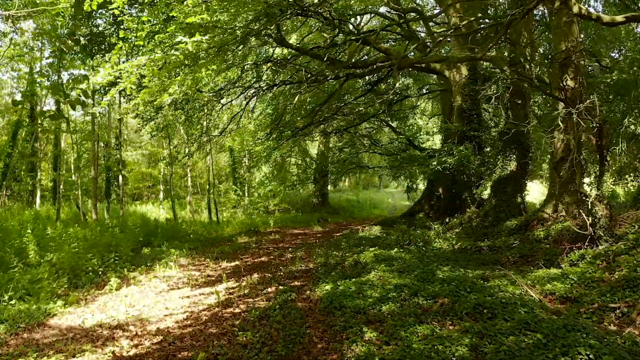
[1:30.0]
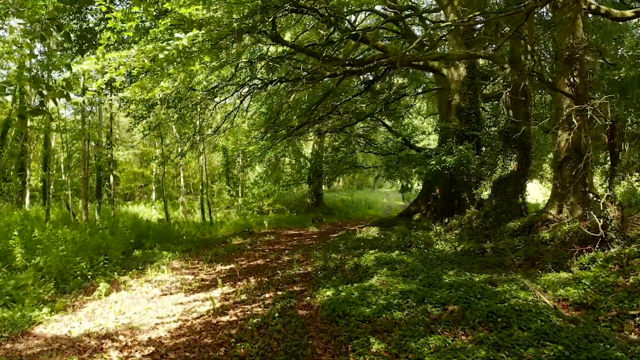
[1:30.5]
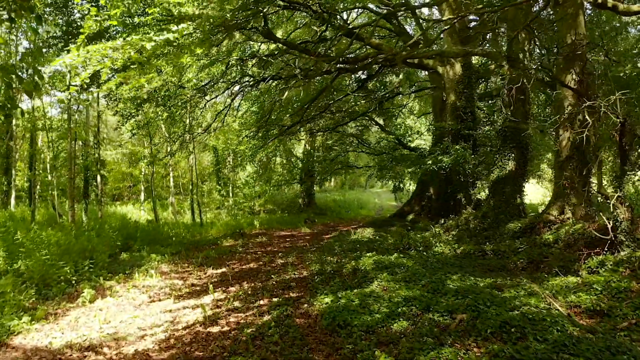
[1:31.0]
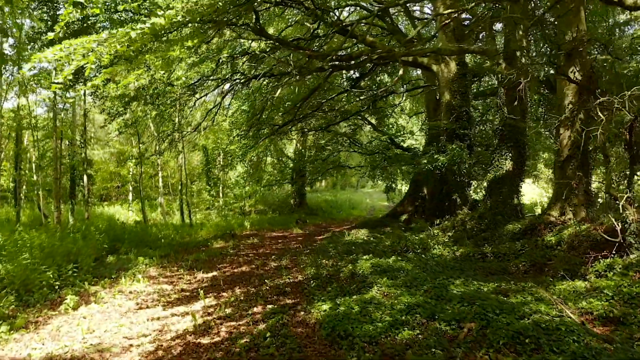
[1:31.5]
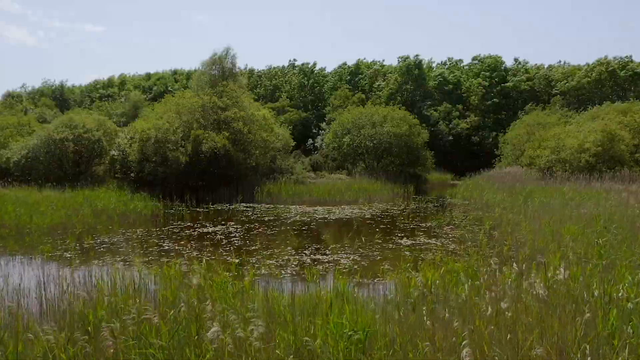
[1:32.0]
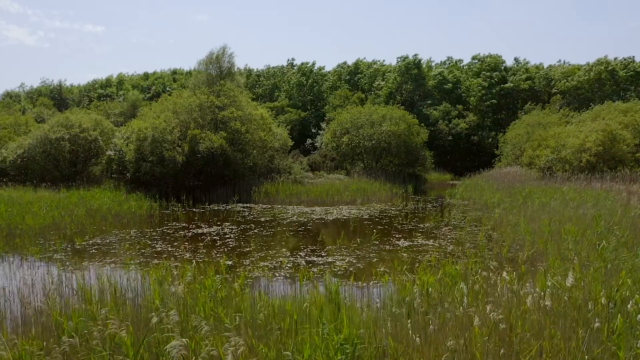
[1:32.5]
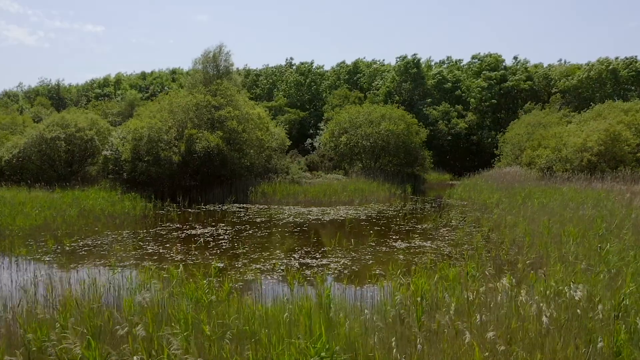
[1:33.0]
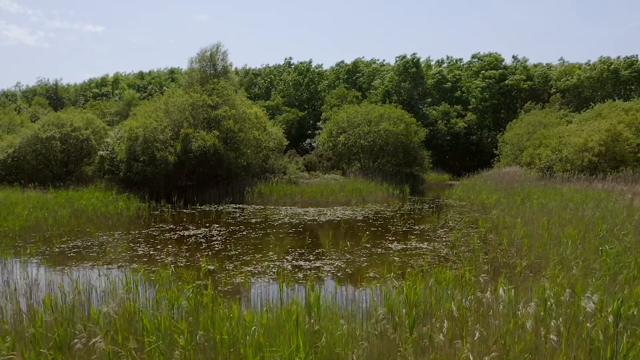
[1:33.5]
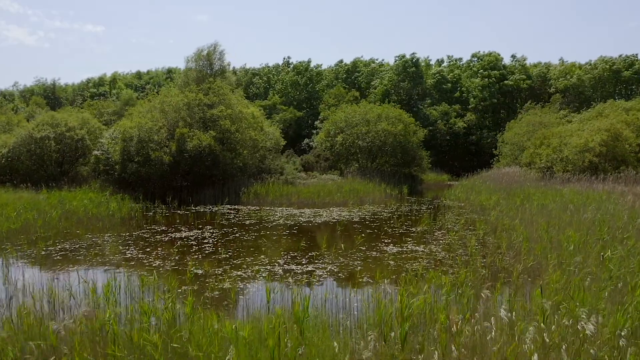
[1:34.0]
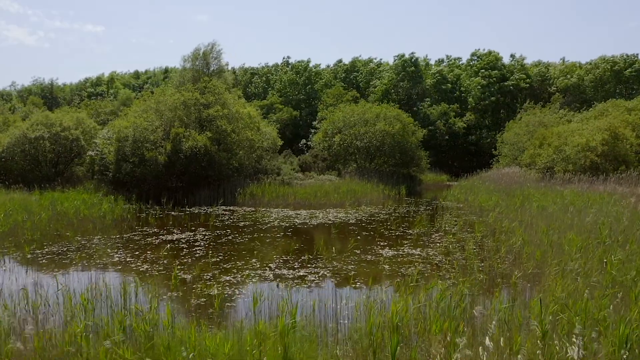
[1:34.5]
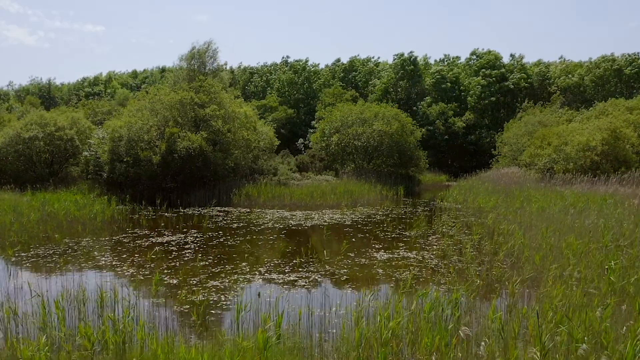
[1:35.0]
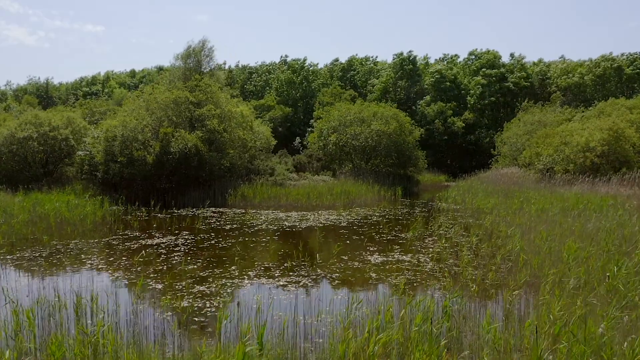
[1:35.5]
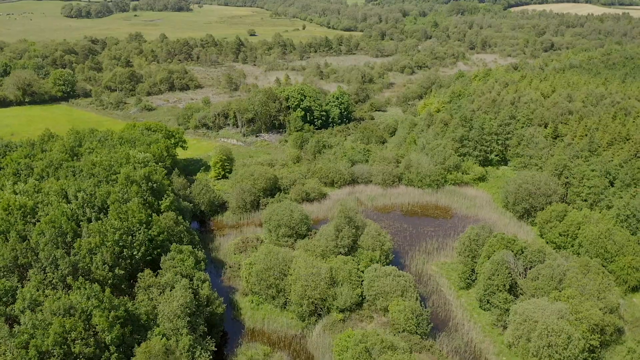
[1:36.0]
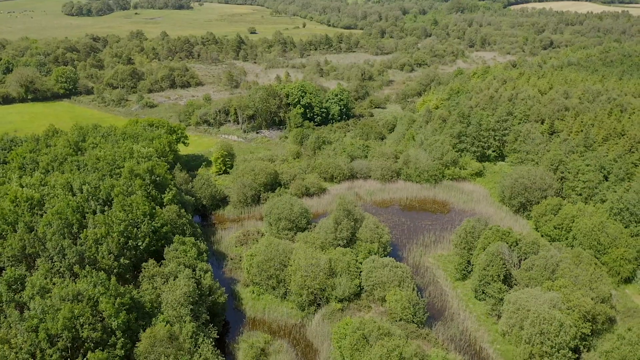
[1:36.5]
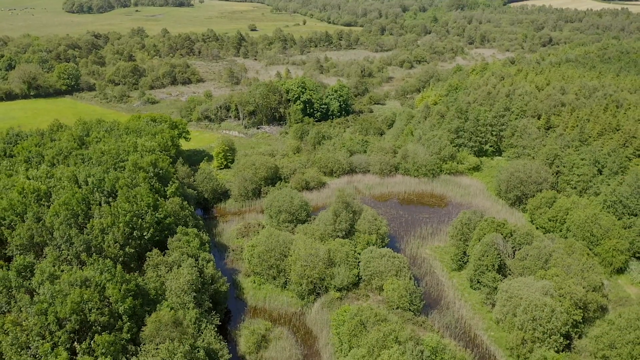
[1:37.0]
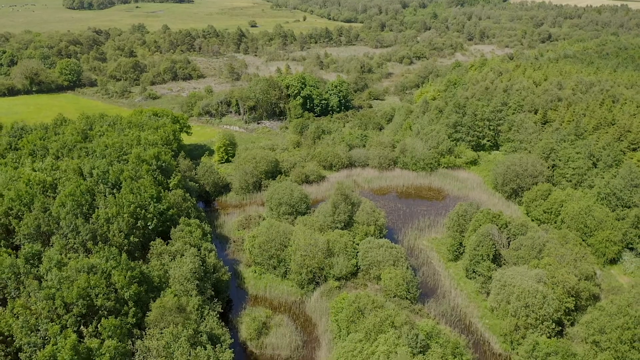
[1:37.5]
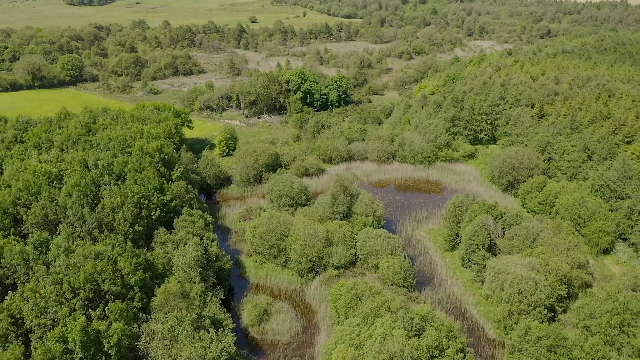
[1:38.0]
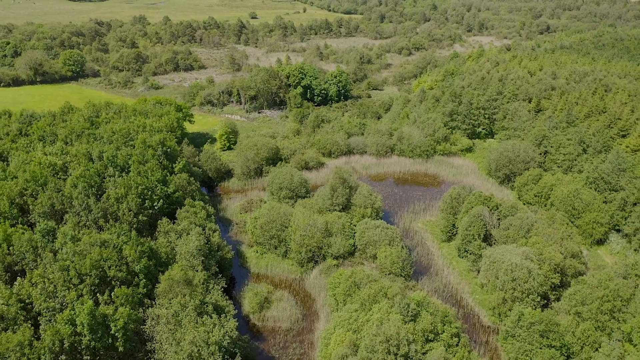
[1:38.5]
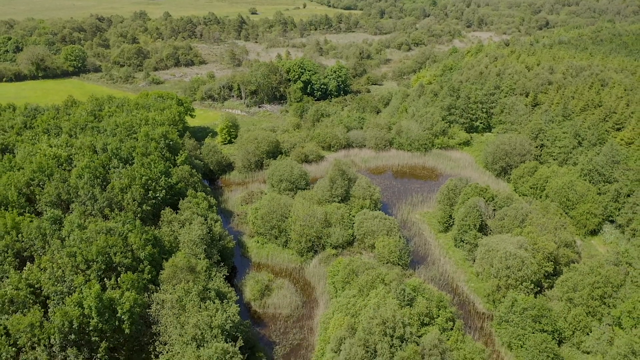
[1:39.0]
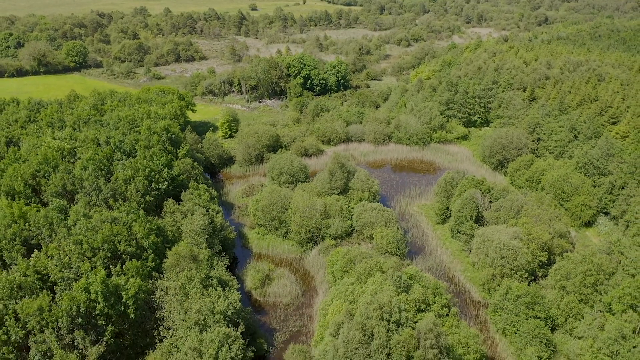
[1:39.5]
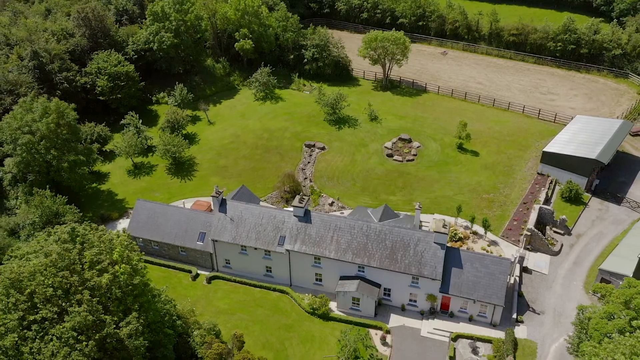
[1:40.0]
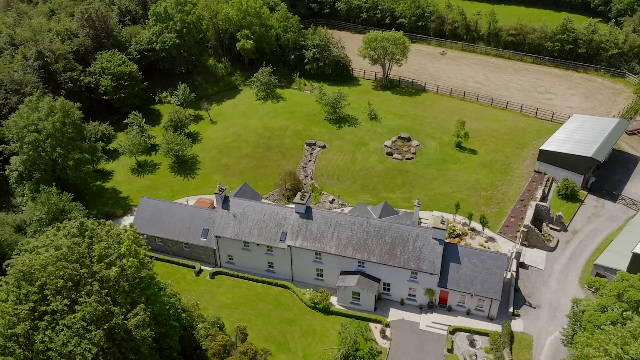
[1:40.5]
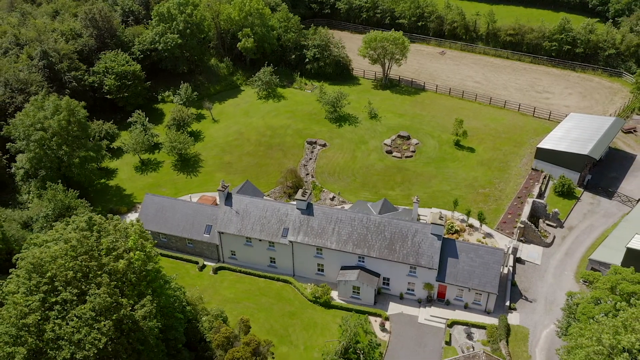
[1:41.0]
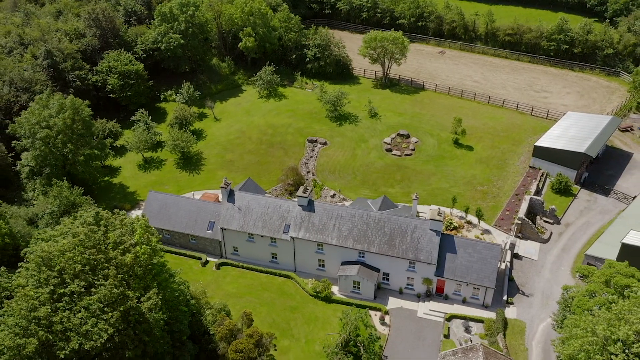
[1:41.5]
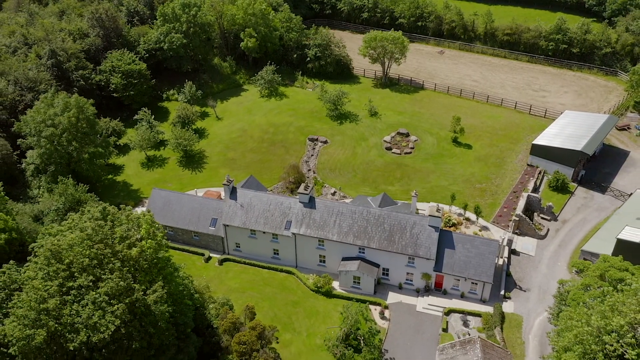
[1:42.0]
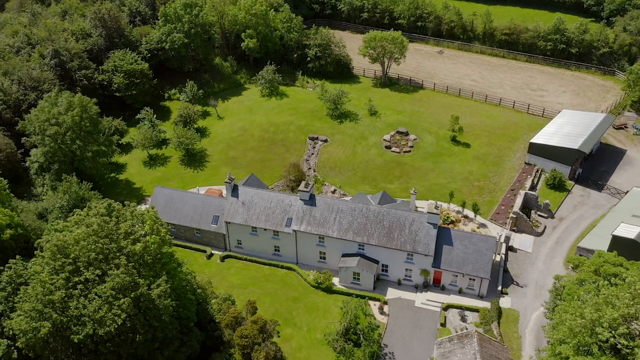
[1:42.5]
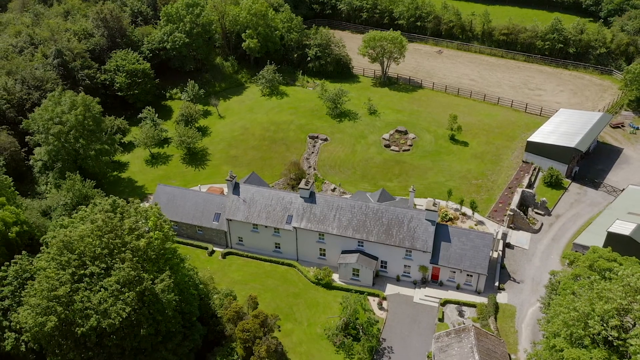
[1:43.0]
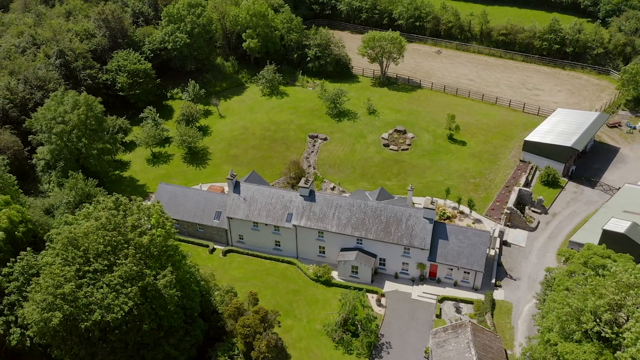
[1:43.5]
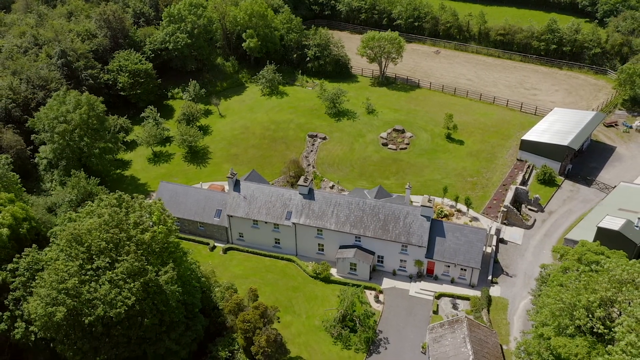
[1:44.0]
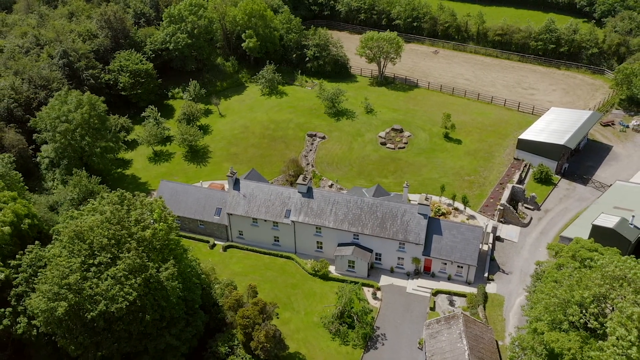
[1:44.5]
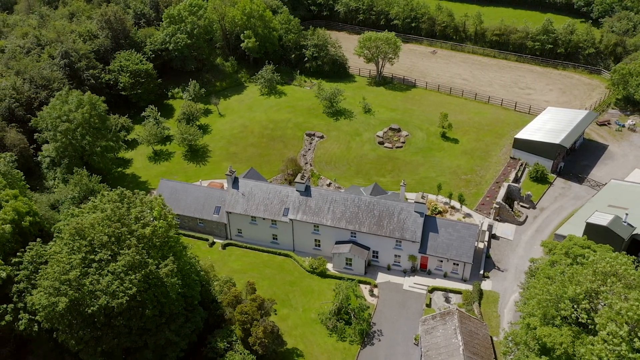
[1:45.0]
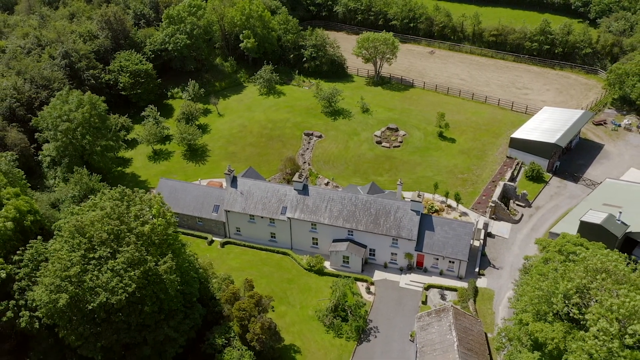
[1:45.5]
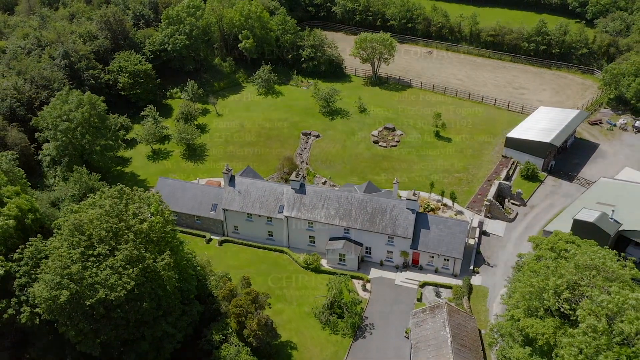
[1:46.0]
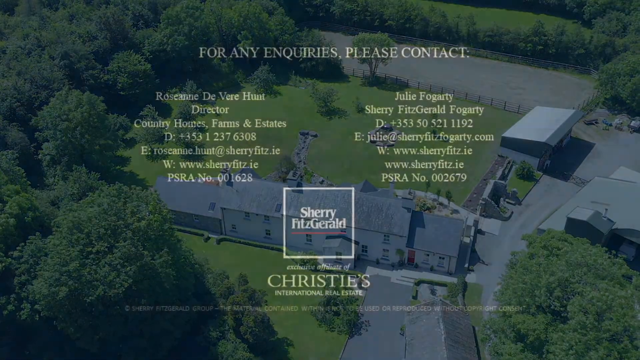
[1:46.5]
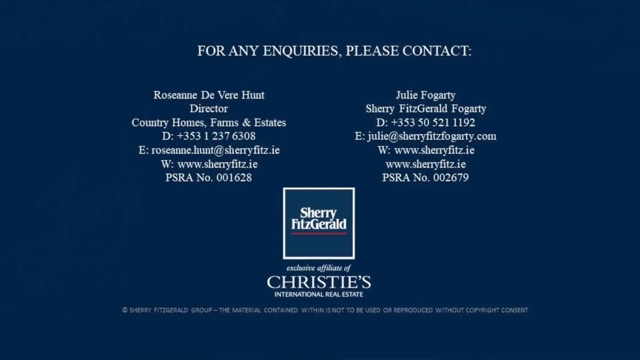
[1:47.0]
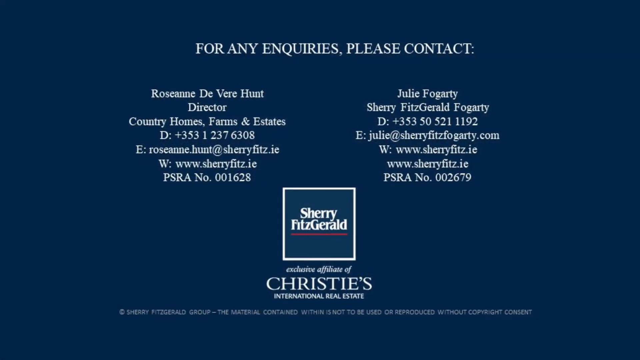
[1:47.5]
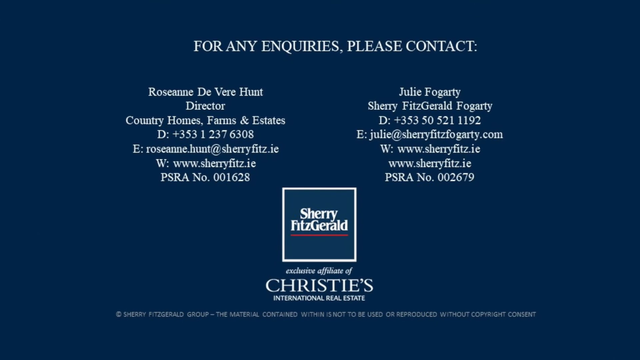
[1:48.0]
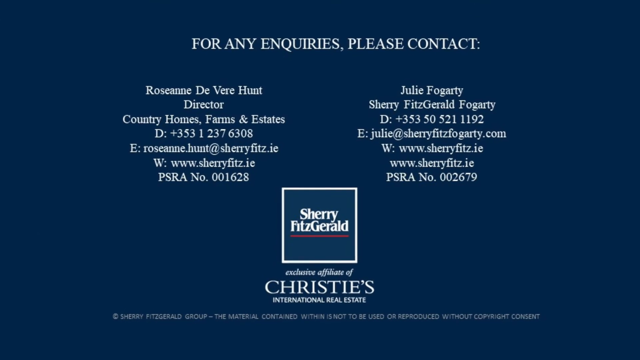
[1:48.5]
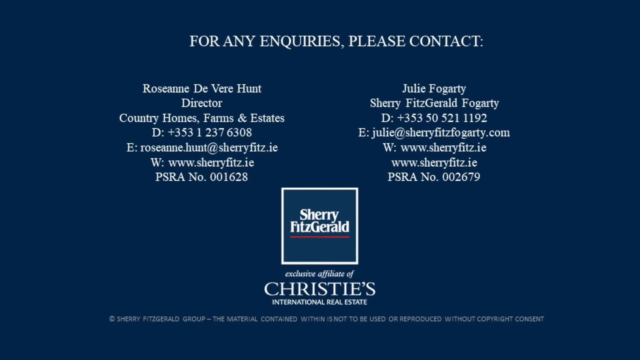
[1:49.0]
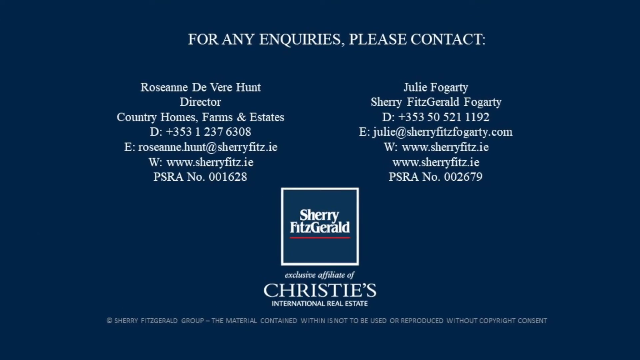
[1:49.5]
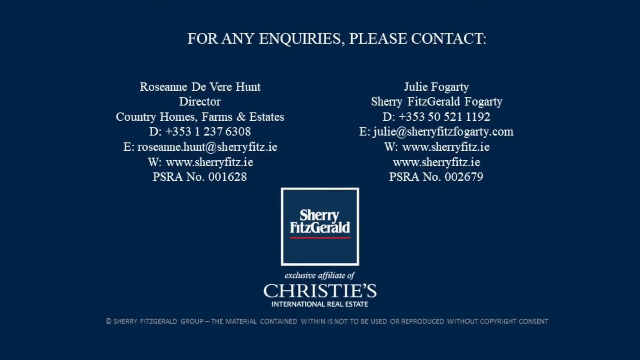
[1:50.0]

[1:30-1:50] The video continues through the forest, then cuts to an area with a body of water with small floating white flowers on top of it, or possibly tree leaves. Another view of this water and tree area follows, and then the video returns to the house with another overhead shot of it. It then switches to a business sheet that says "for any inquiries please contact," with a director listed on the left along with a phone number, email, website, and PO box, and another contact for the Sherry Fitzgerald business. The sign from the beginning of the video is repeated. The director has an extra title while the other person does not, yet the two listings are the same length.